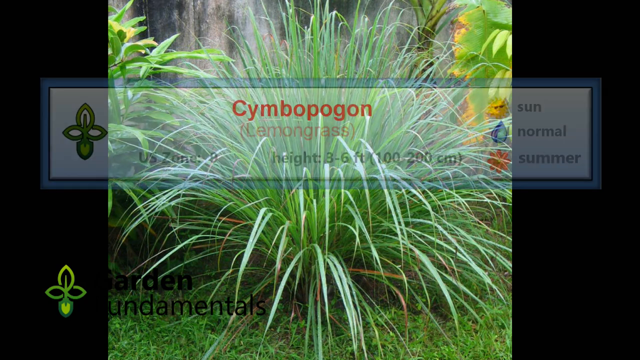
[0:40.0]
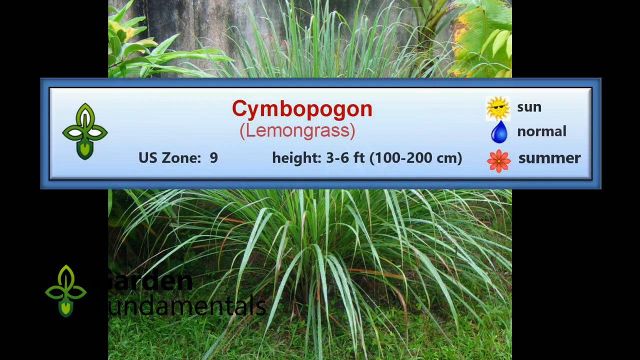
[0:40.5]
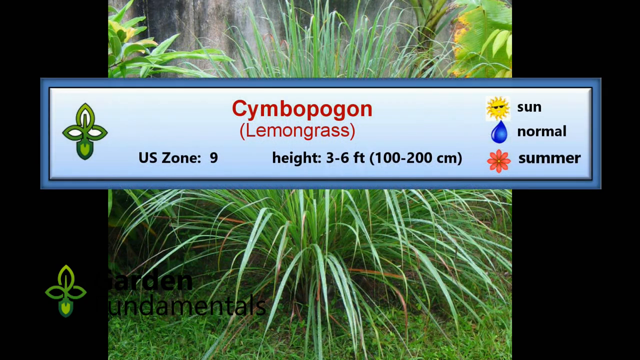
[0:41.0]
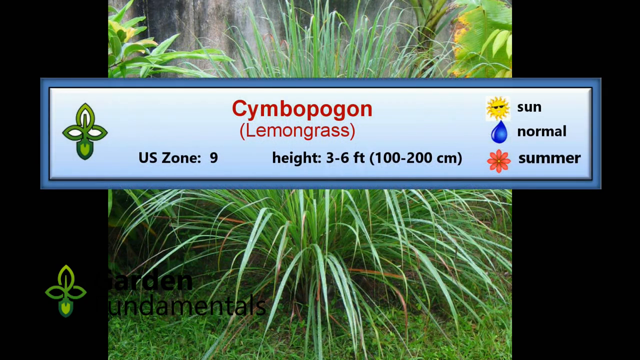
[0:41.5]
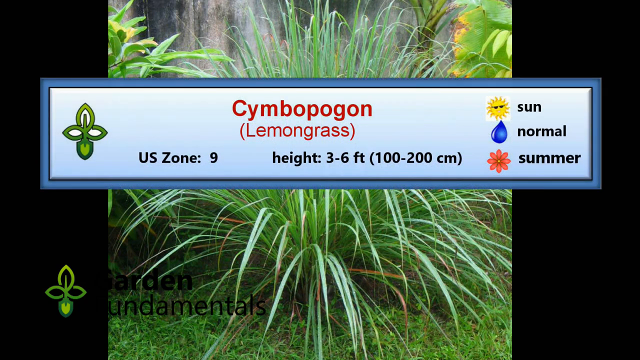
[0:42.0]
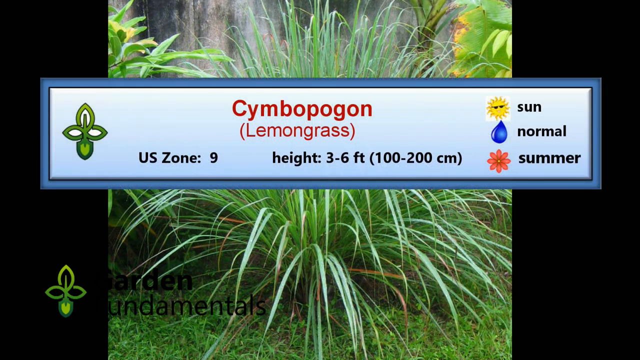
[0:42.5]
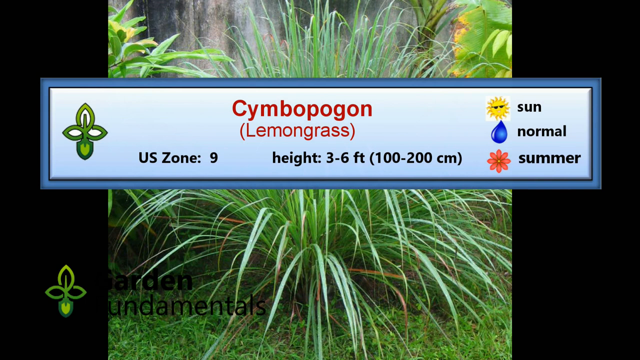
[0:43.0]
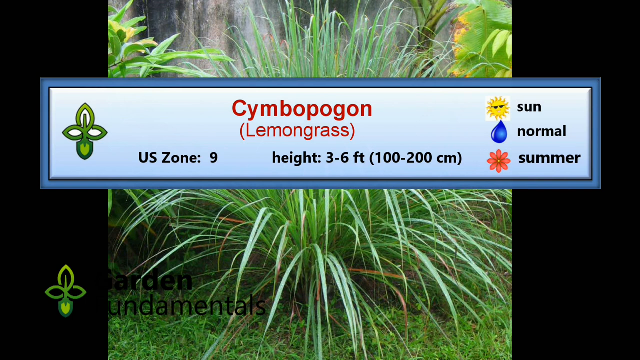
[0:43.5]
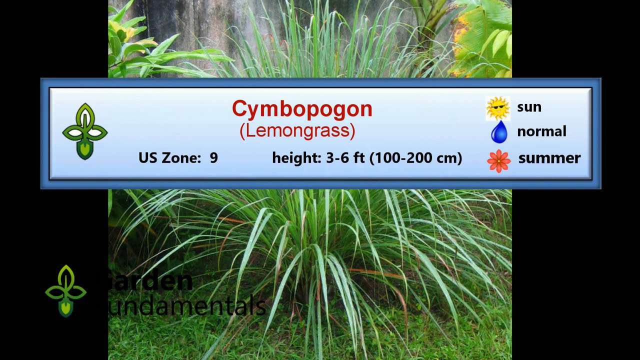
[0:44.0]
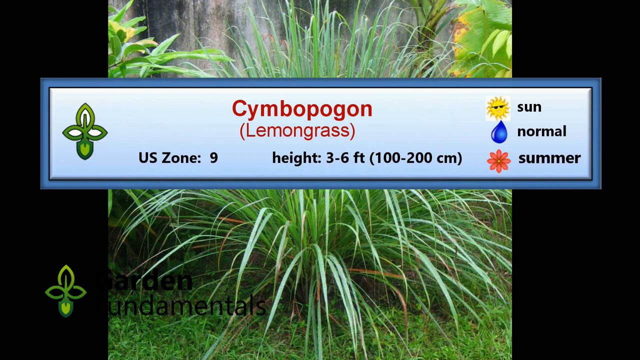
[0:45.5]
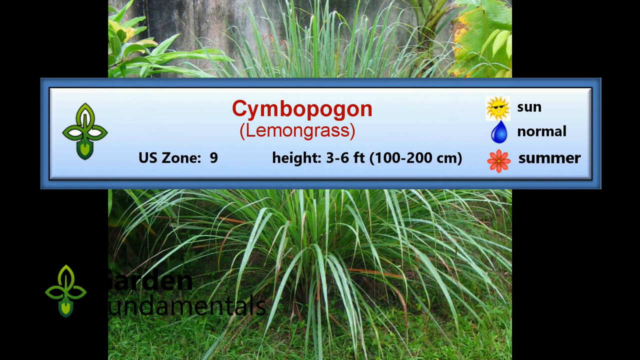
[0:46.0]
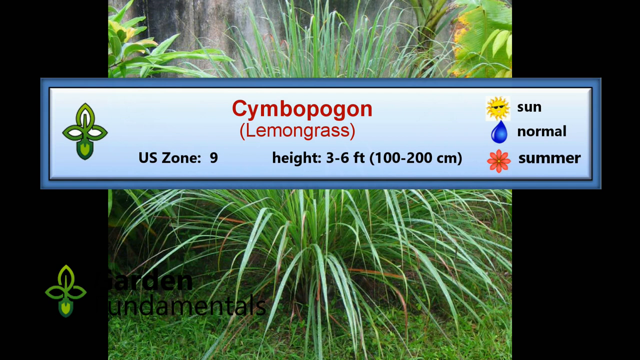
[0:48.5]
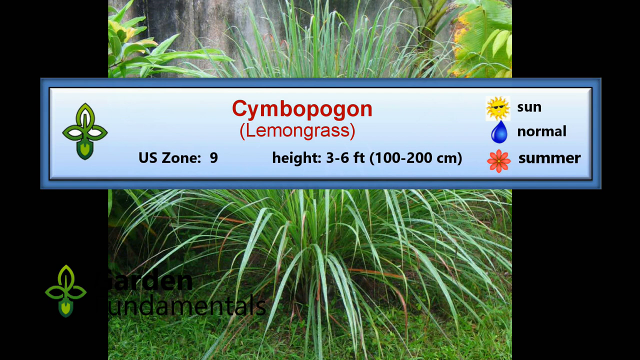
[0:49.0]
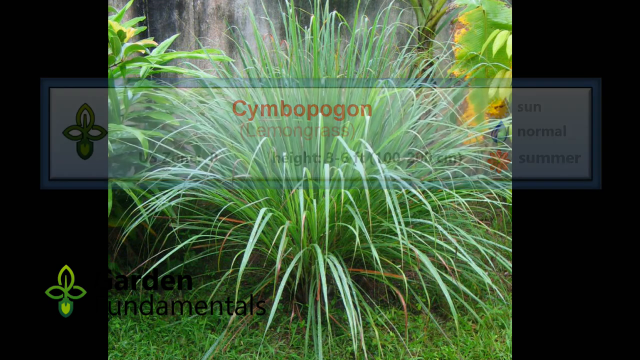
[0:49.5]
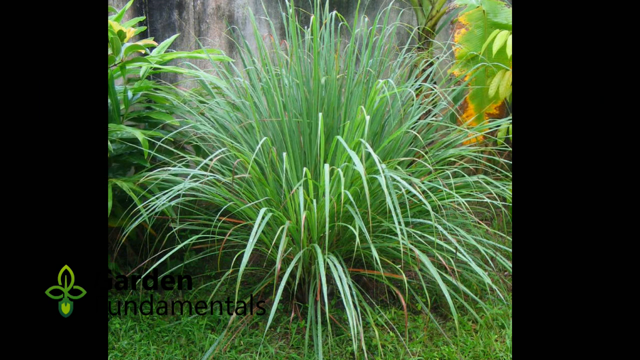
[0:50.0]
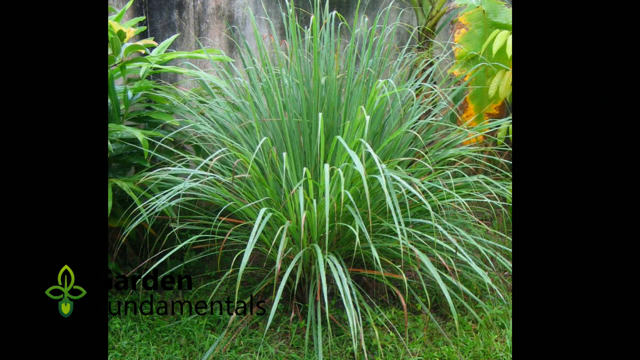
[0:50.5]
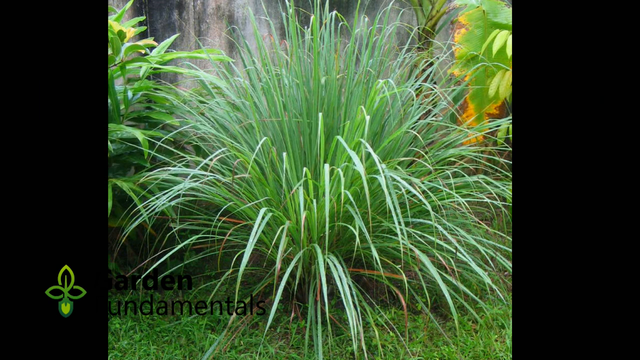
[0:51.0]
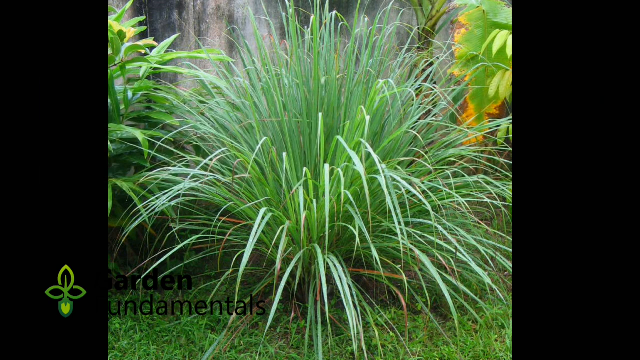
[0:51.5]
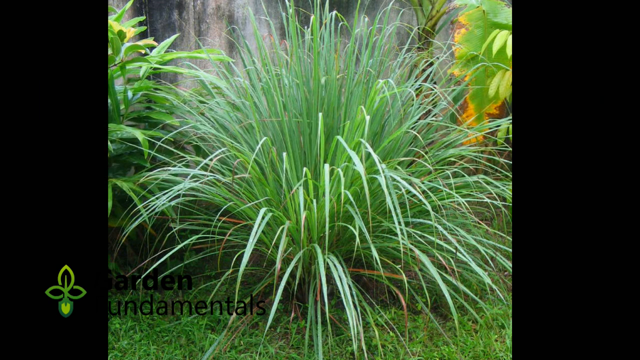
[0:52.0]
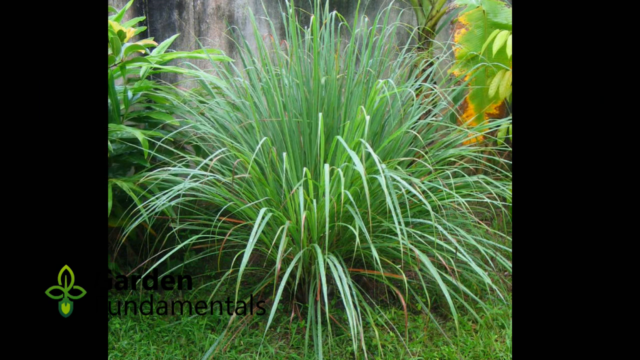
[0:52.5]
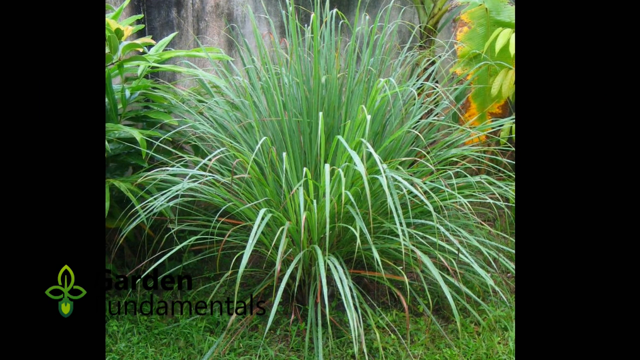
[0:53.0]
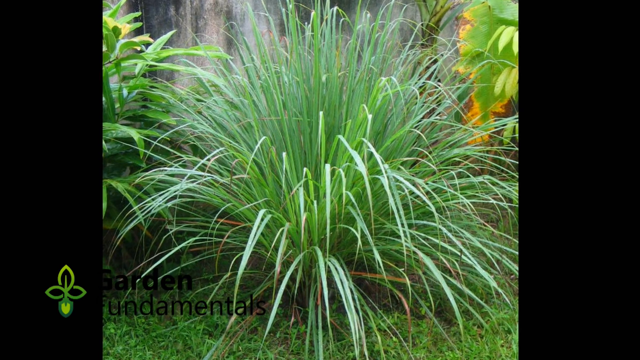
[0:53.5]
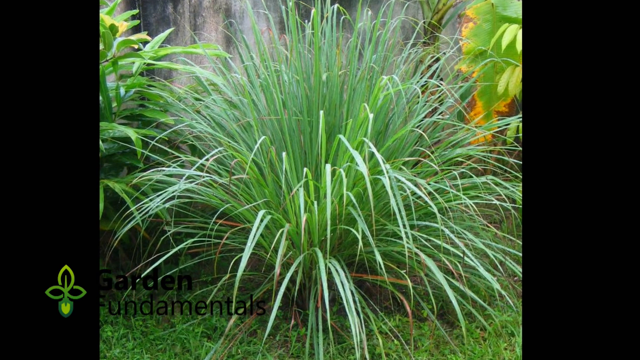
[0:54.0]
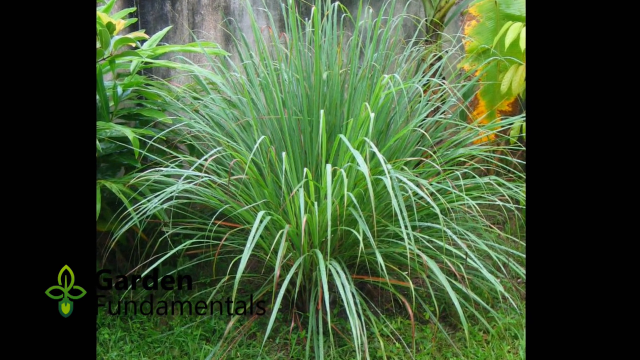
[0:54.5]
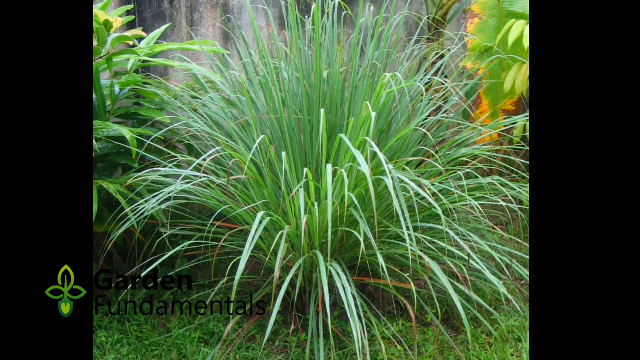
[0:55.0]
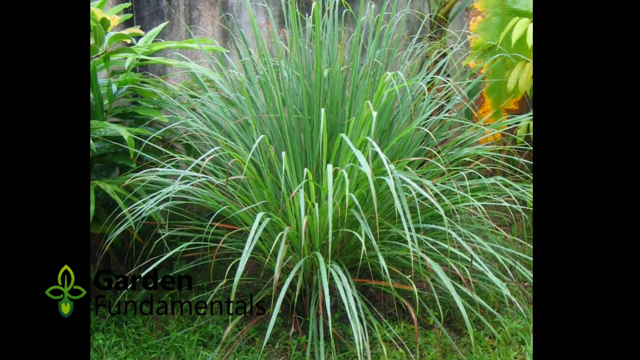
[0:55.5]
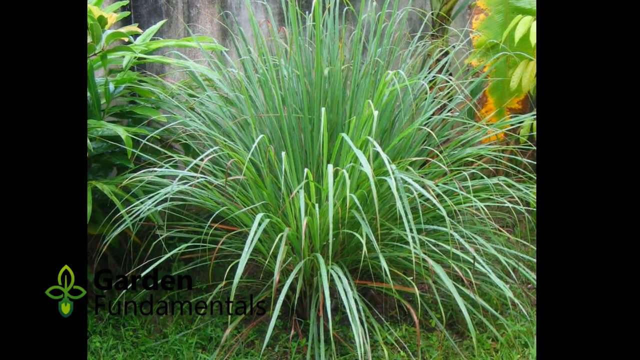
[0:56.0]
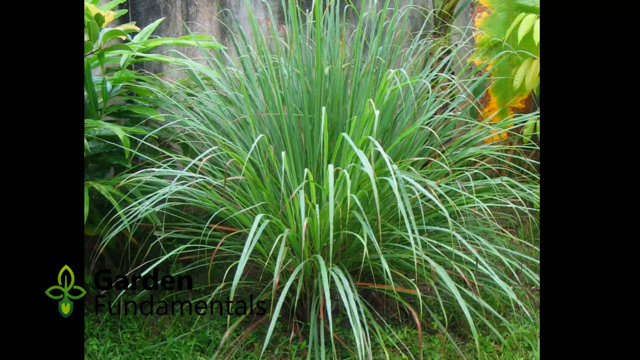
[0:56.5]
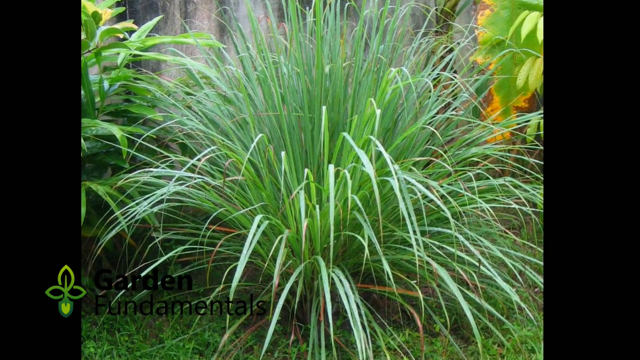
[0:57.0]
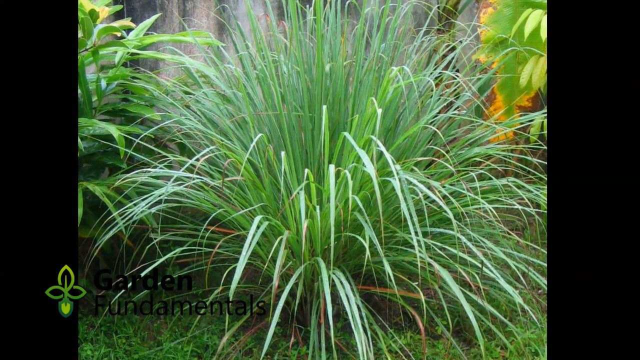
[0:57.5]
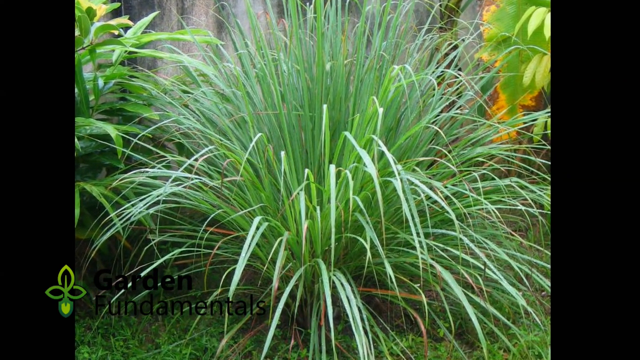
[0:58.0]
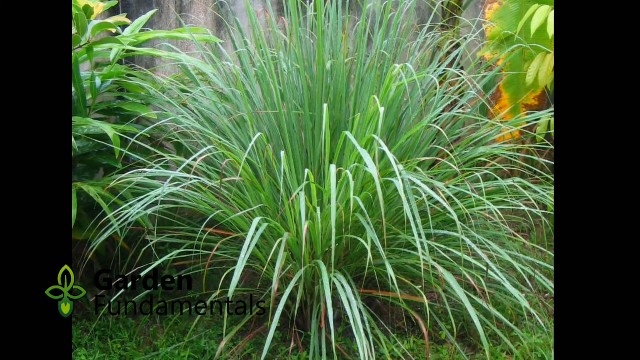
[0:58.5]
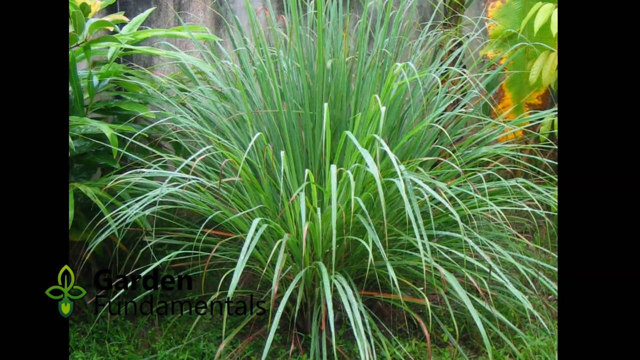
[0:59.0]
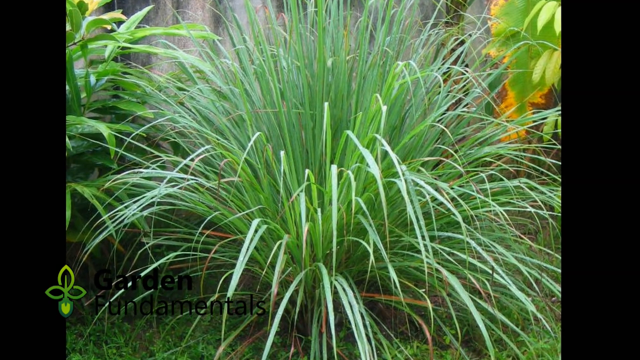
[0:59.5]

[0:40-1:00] A picture of some sort of grass is on the screen, with black edges fitting the picture in the middle; there is other green stuff around it, but the grass is the primary focus. A little text box pops up in front of the picture about lemongrass, listing a height of "3 to 6 feet, 100 to 200 centimeters" and "sun, normal, summer", describing where the grass grows, how tall it grows, and what conditions it requires. The box fades away, leaving the picture of the lemongrass, and the view slowly zooms in toward the center of the picture, the sides slowly fading away as it gets closer.